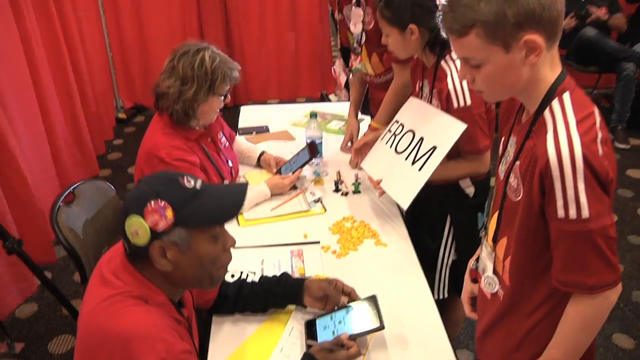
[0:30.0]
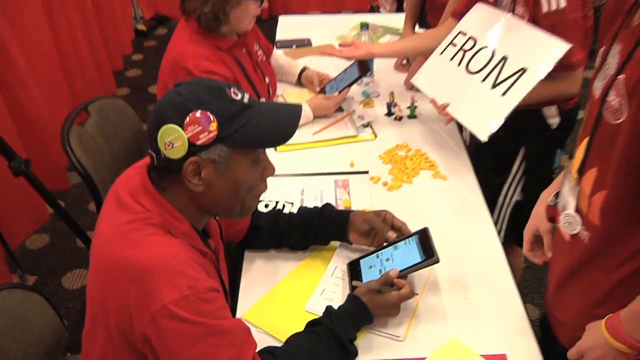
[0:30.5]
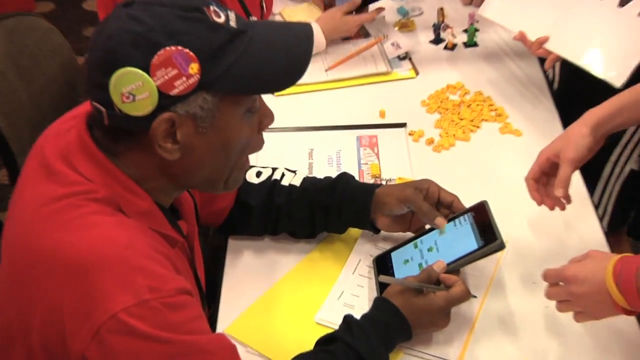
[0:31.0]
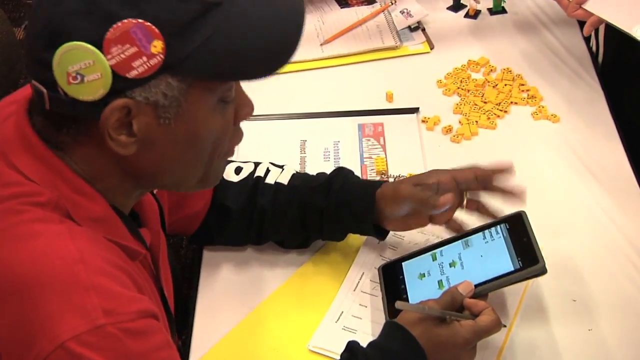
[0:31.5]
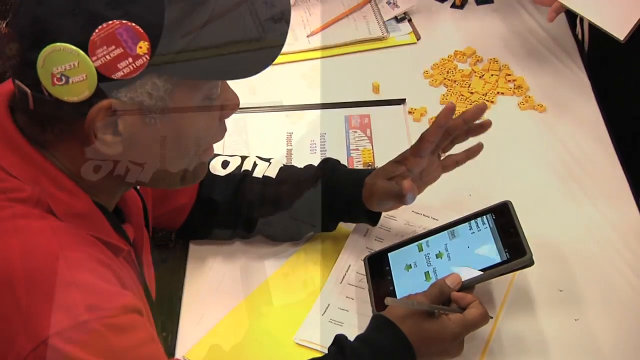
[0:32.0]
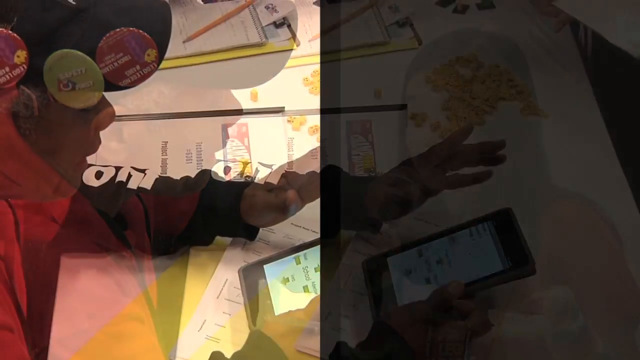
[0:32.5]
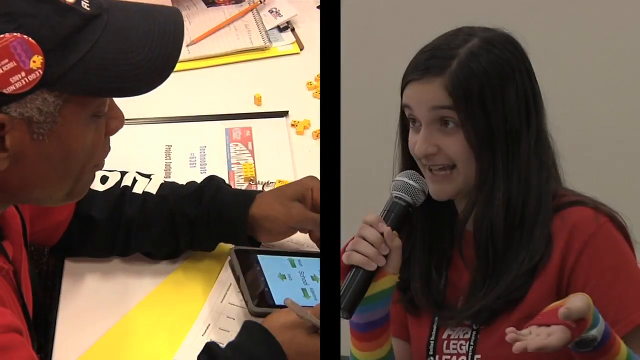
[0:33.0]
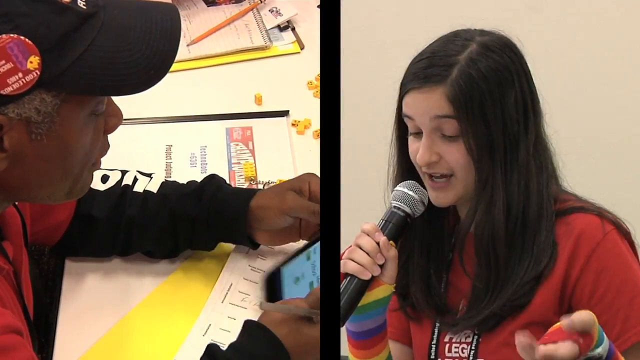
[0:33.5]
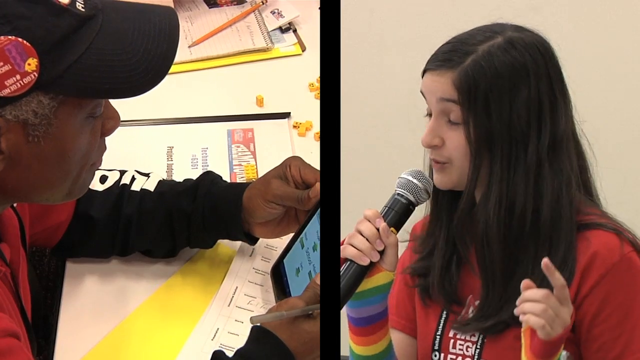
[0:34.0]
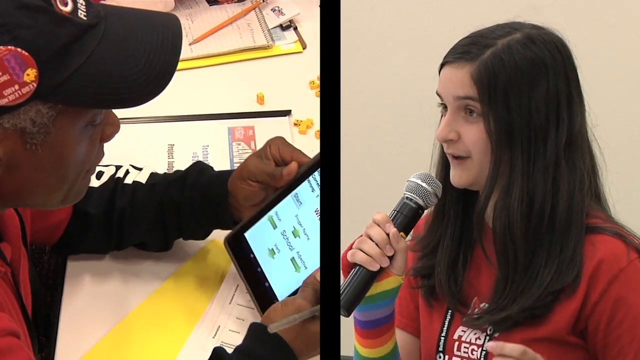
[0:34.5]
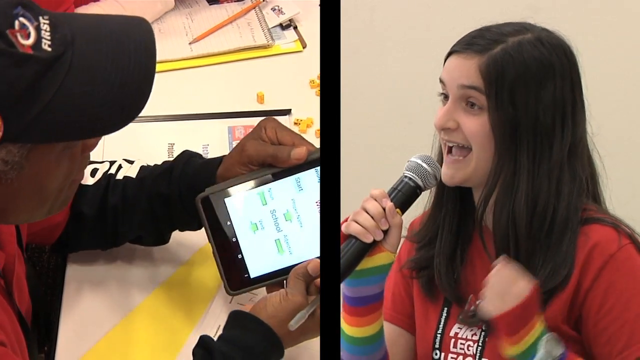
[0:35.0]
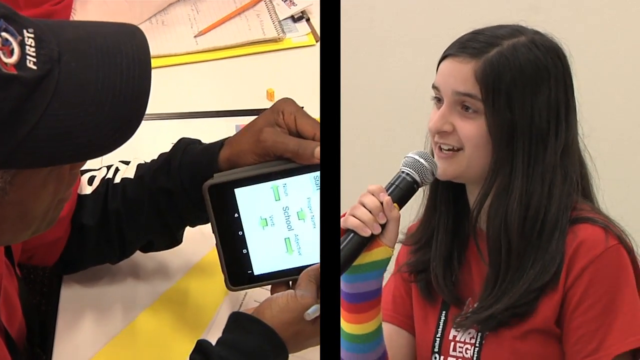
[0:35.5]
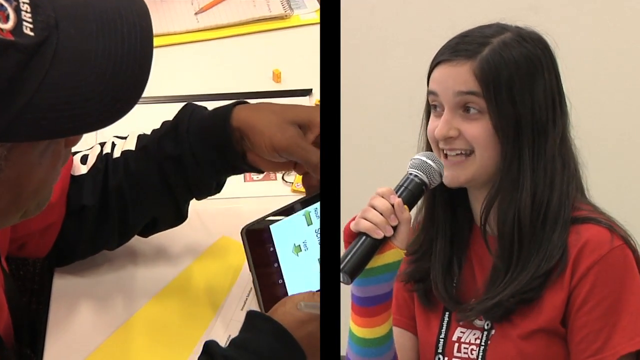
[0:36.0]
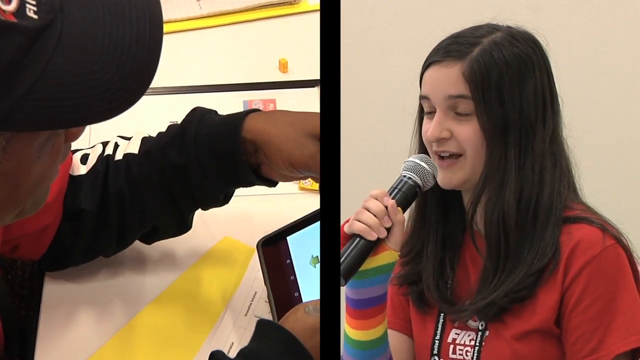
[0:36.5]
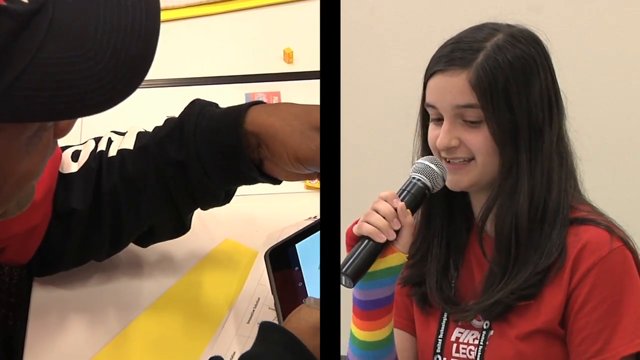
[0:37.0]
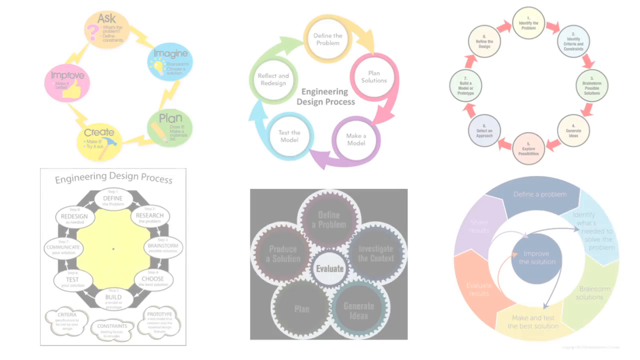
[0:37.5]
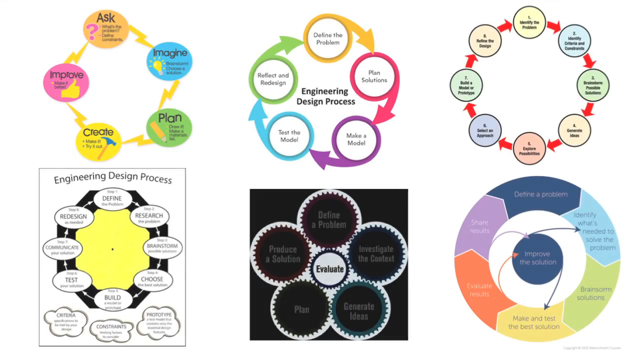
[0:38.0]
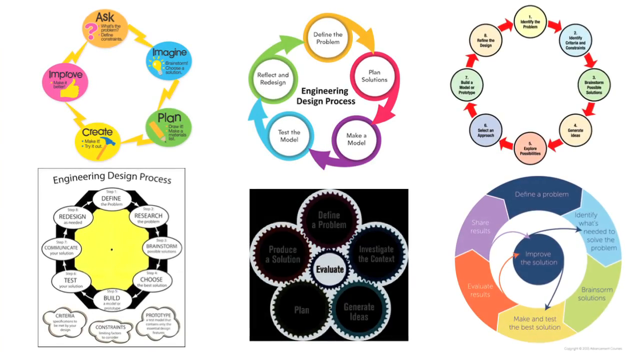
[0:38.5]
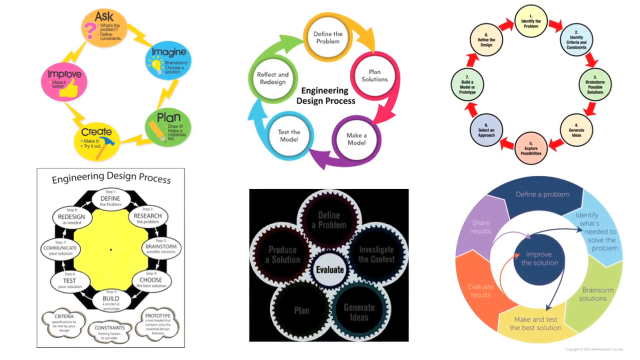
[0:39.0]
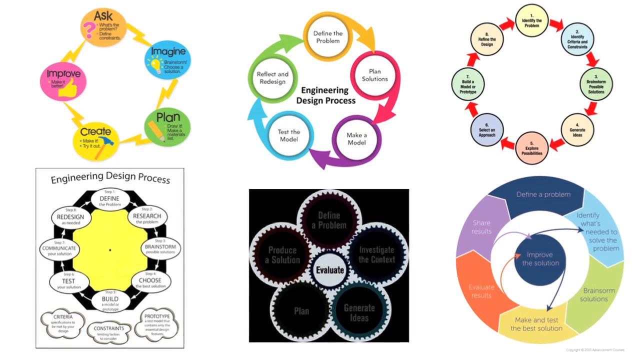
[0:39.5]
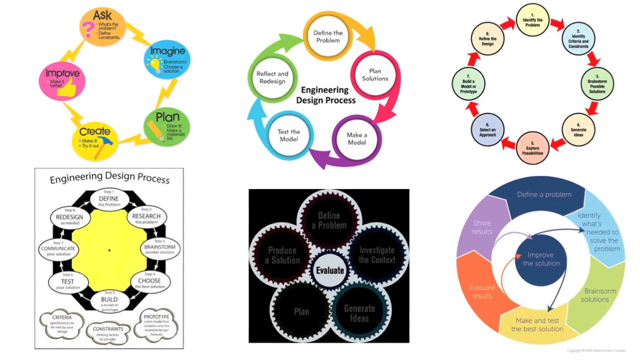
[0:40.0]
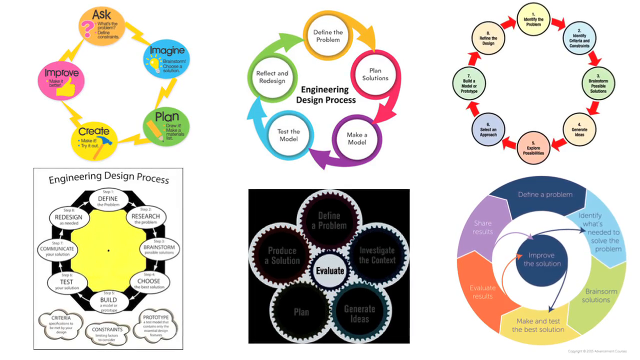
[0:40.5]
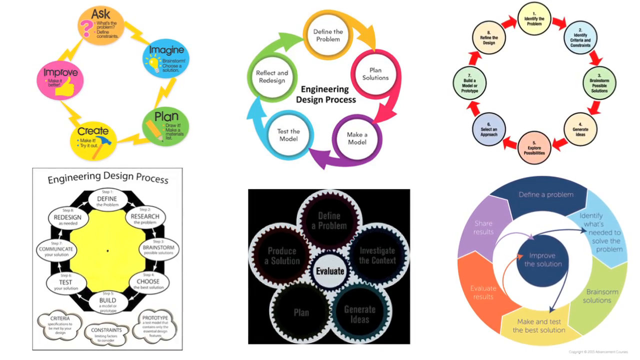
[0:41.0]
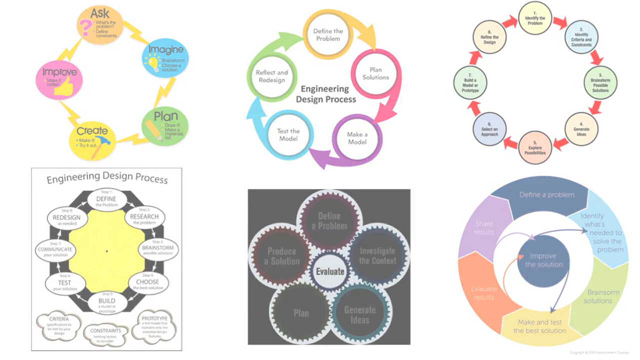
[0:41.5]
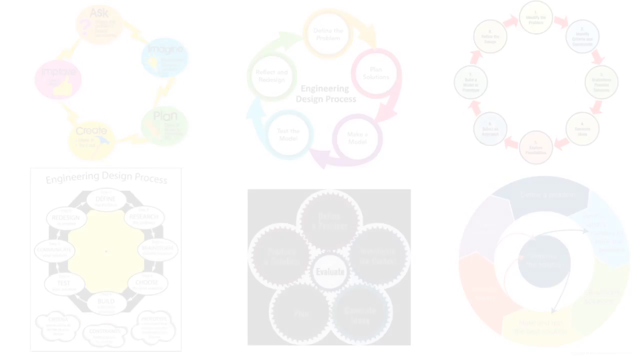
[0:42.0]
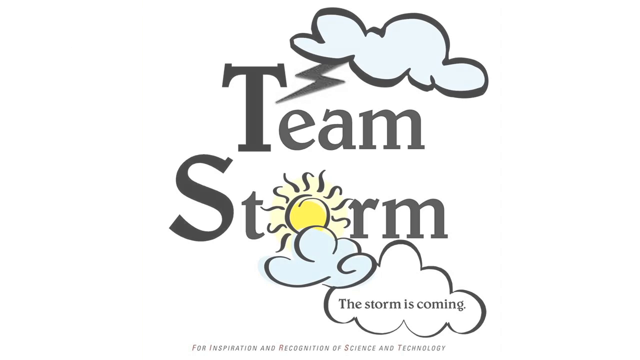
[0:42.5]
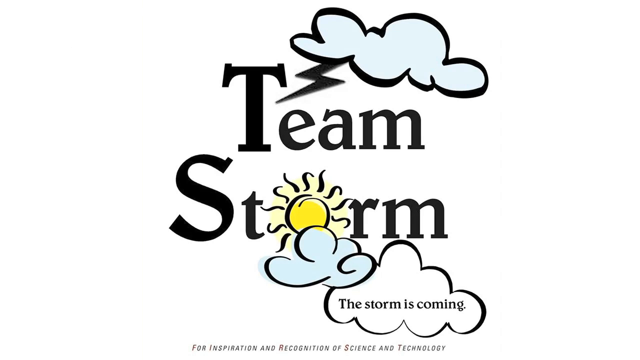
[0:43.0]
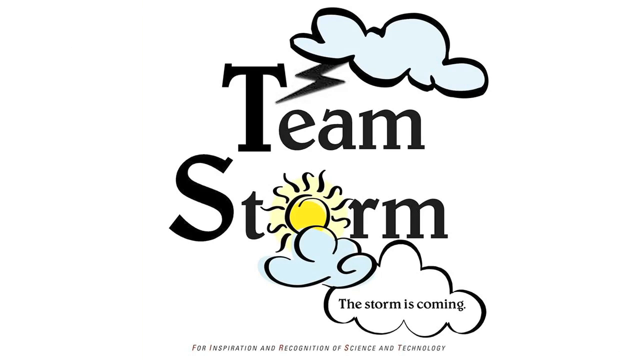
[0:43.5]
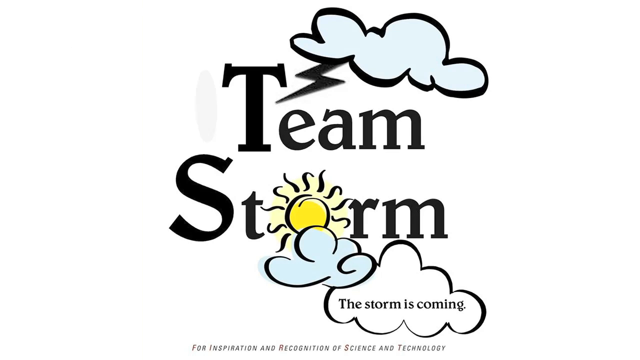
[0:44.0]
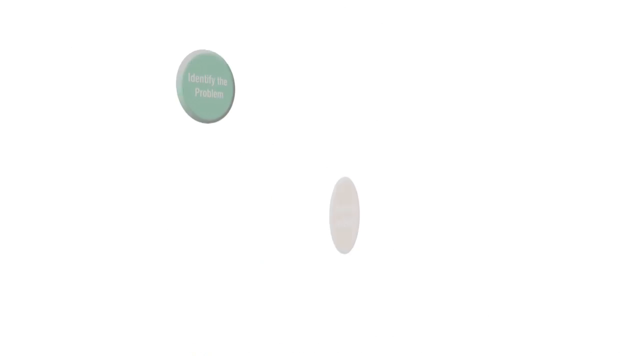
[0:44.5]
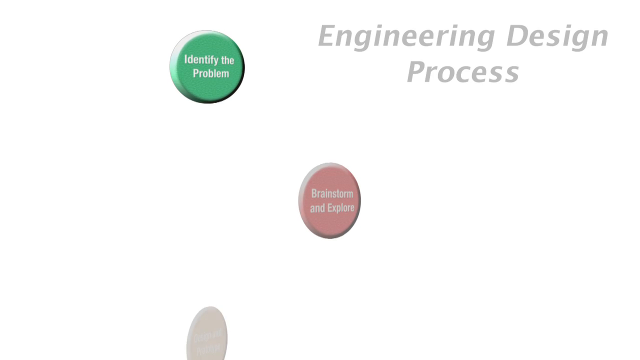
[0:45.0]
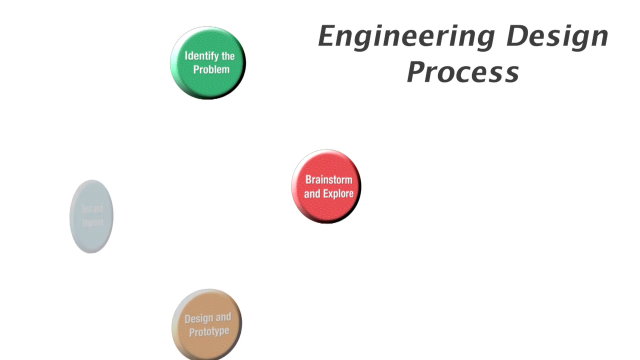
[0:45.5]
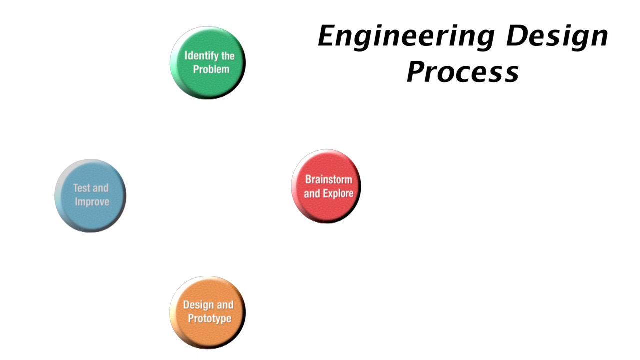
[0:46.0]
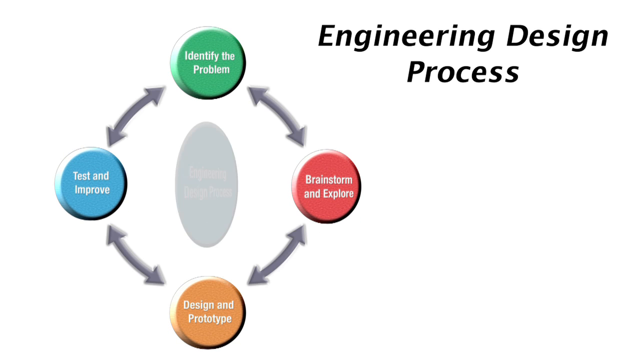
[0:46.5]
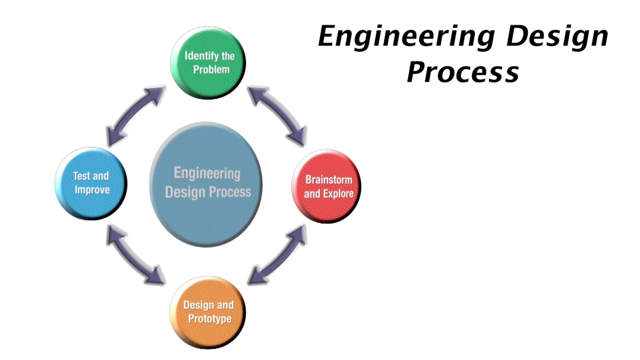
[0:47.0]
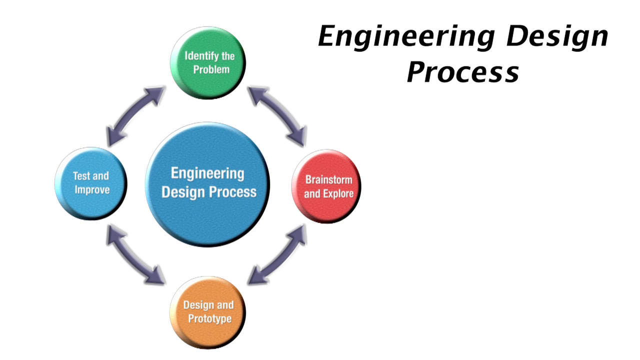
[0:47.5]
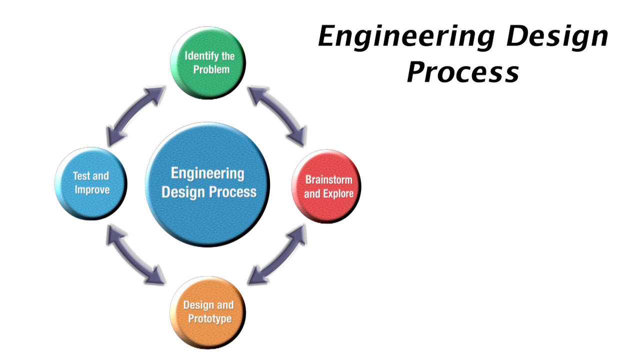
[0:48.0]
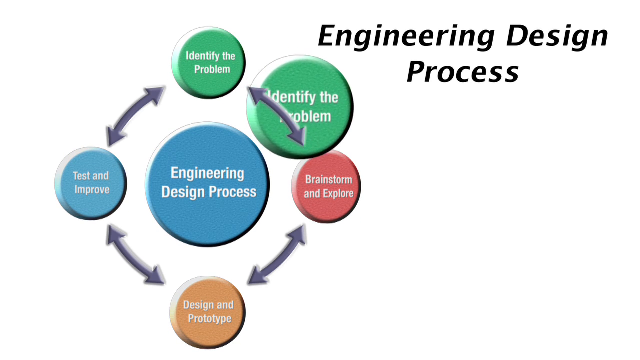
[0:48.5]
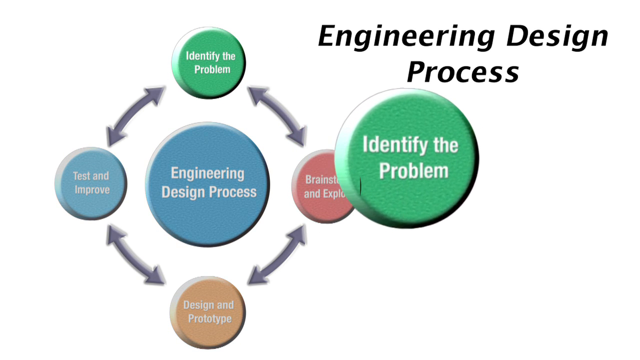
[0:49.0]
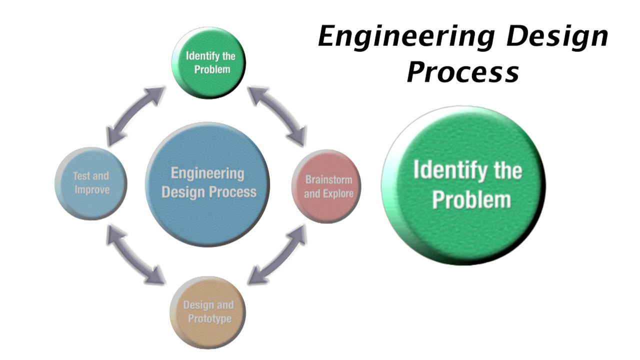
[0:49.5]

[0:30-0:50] Two students and a woman stand on the right side of a table, while a woman and a man sit on the left side. Everybody wears red shirts. The two seated people look at phones and write on tablets and pamphlets. The kid standing up holds a billboard that says "from" and is leaned over, and the other kid on the end appears to be talking and explaining something to the man behind the table. The setting looks like an academic competition, and the boy seems to be having a problem with one of his reviews as he explains it to the man. The scene then changes to a collage of six different diagrams showing bubbles in a circular pattern, then to team storm, and a screen appears that says "engineering design process" and shows the same bubbles with different titles in a different order. More of the competition at this academic meeting follows.